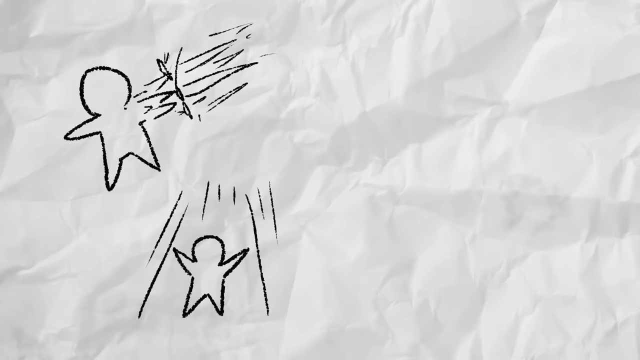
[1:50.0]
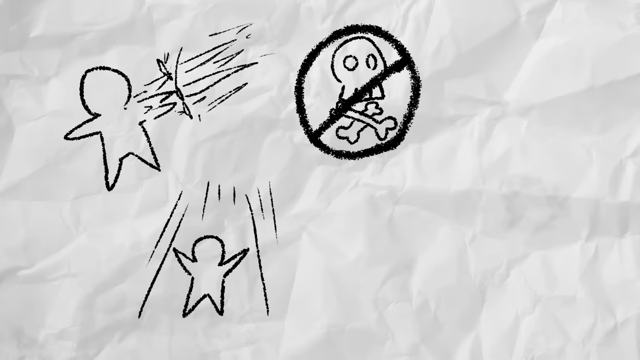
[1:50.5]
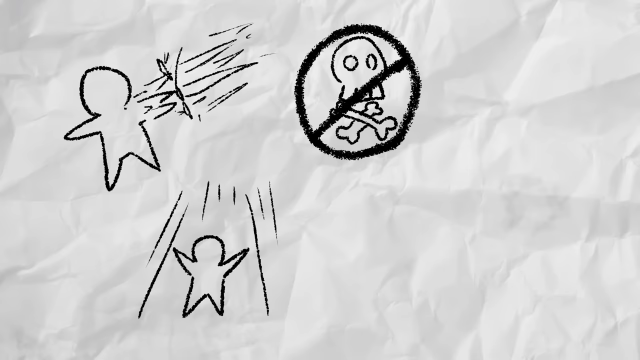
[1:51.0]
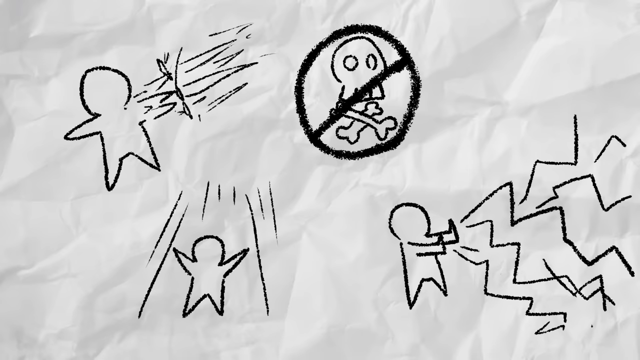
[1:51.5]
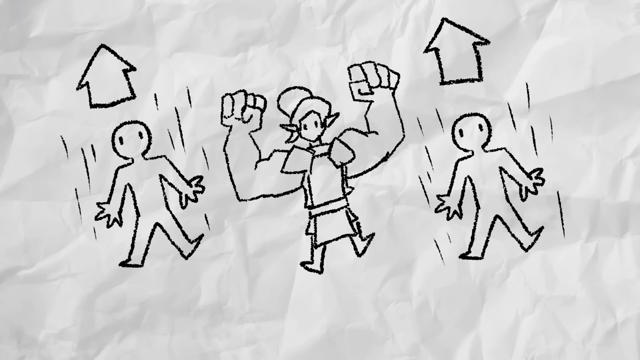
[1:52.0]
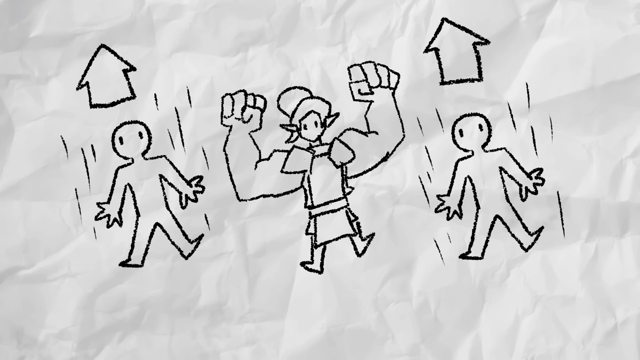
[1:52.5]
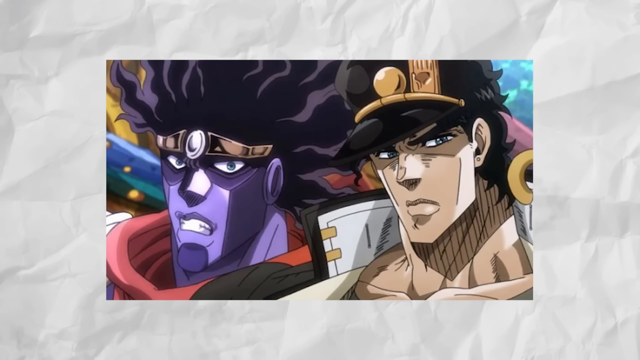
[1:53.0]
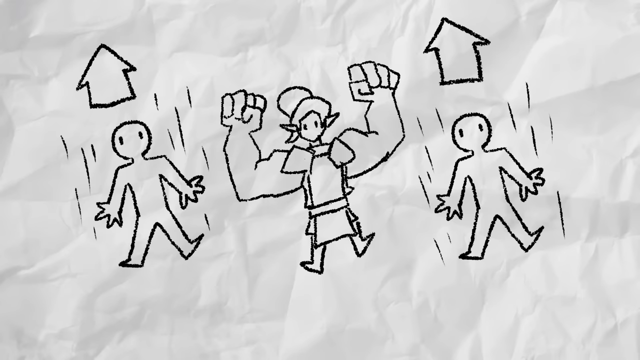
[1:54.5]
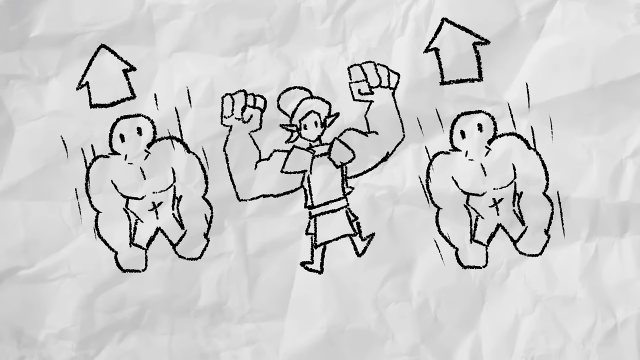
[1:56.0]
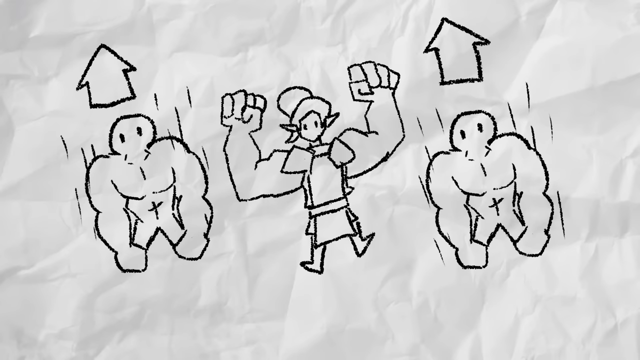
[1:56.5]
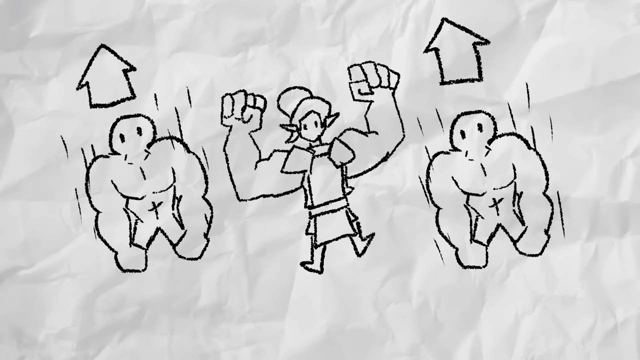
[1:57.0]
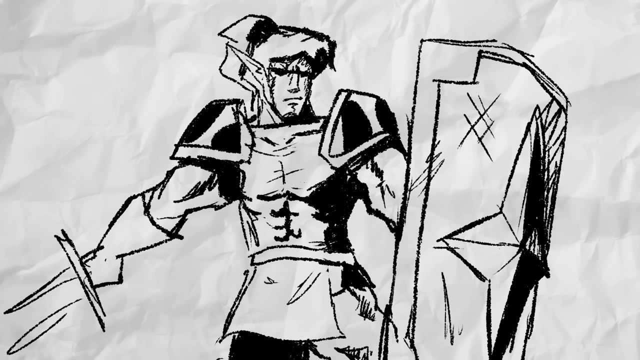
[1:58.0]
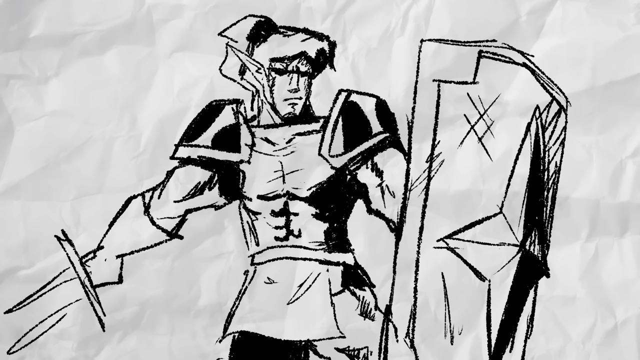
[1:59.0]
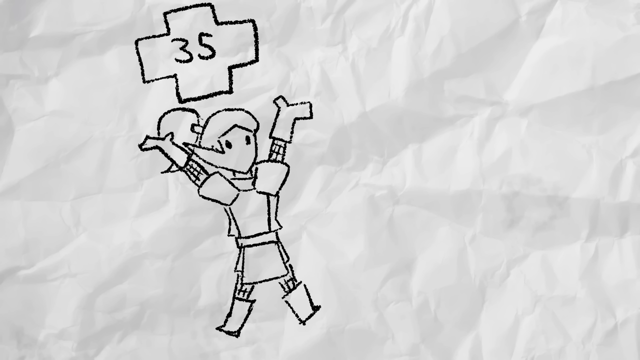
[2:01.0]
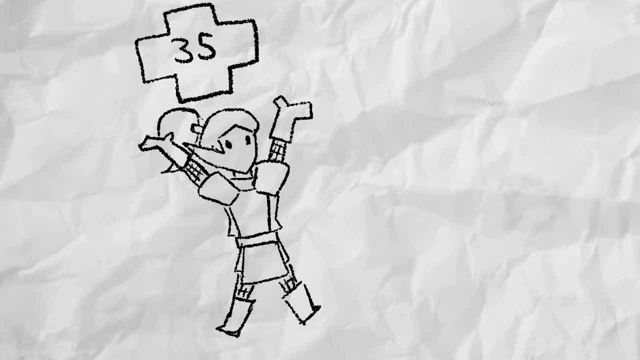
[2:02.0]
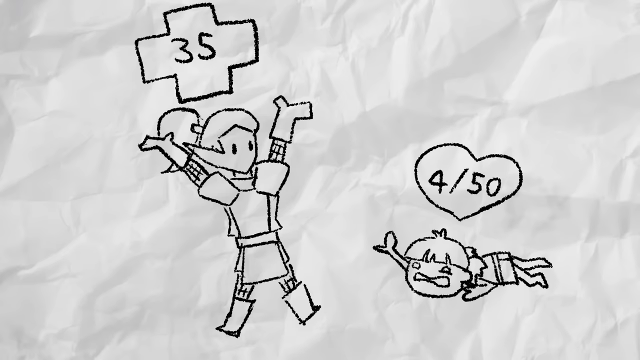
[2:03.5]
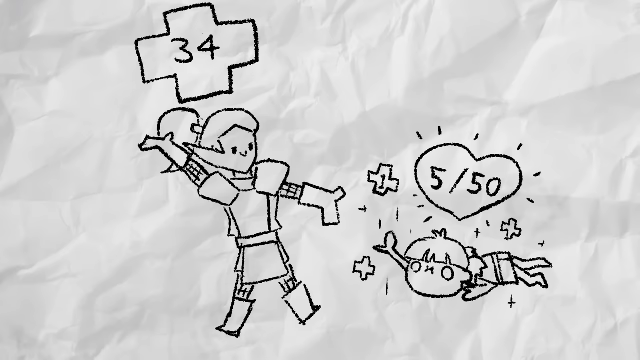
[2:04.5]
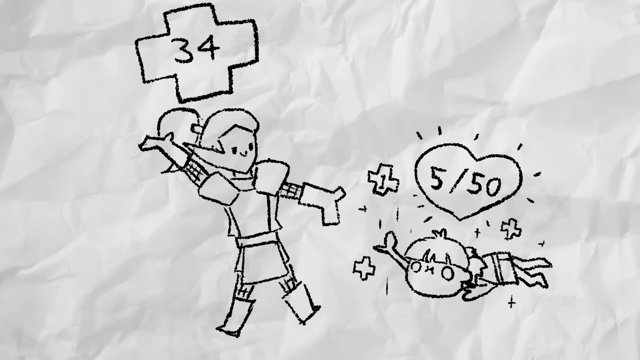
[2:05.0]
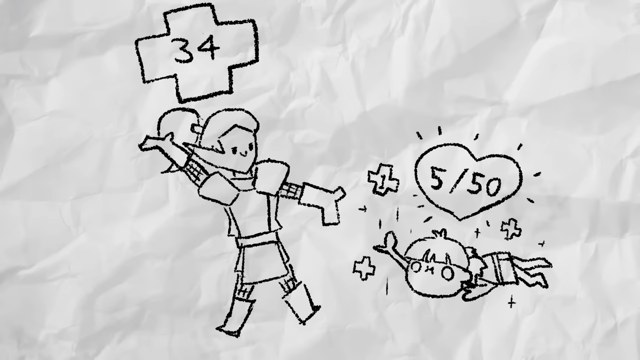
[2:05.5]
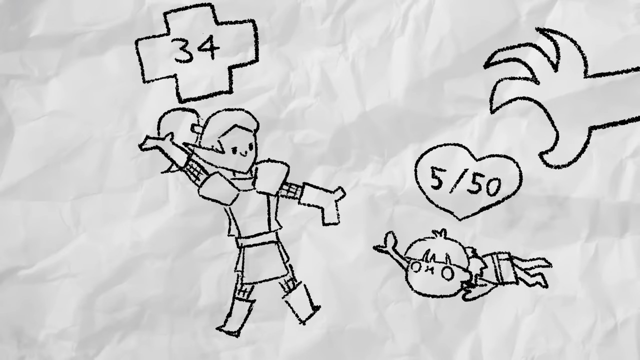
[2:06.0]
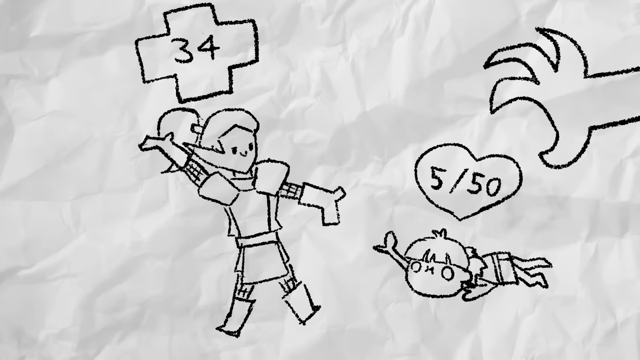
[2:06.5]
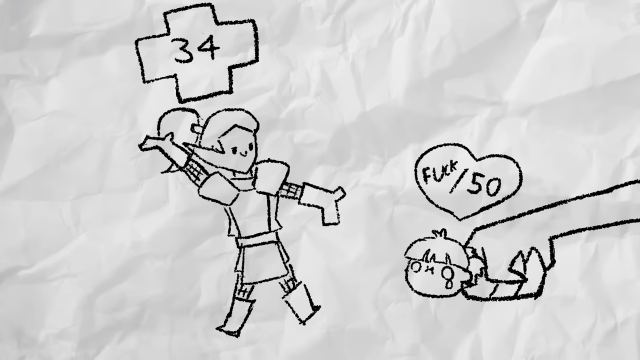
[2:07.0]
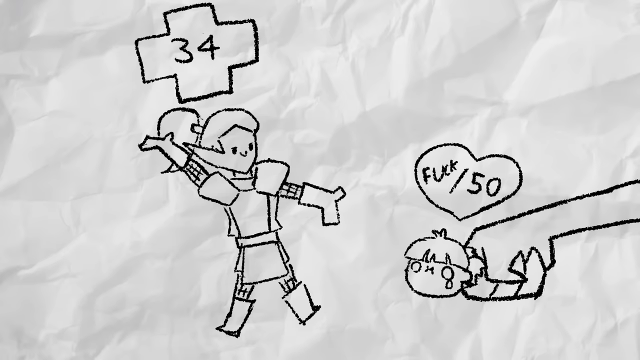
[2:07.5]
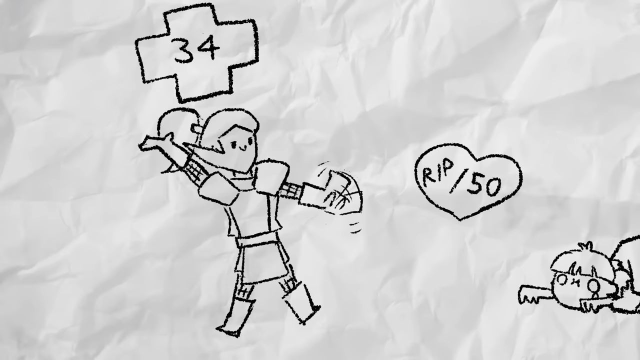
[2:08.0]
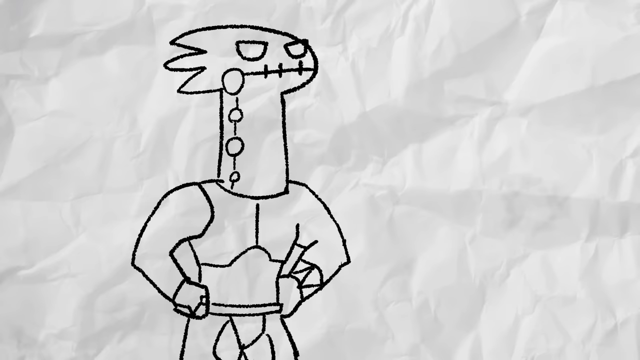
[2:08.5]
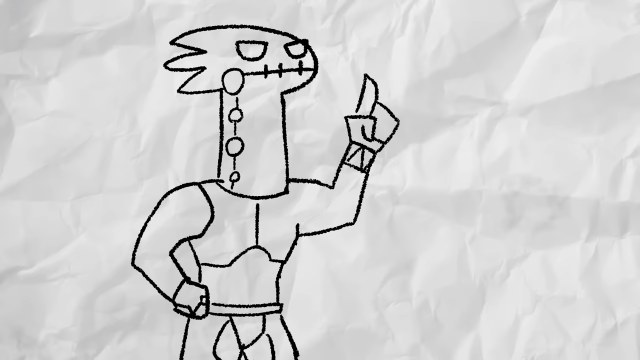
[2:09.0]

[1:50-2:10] Small black animated characters appear to be flying up in the air against a white crumpled paper background. A skull and bones with a prohibited sign over it comes up on the screen. Another of the smaller characters appears to push something away. Two of the regular people have arrows over their heads, with one of the muscular women in the center. The scene transitions to a picture resembling an anime in a lot of bold colors, with one character in purple. It transitions back to the two people with arrows over their heads and the muscular girl in the center, and the people with the arrows become muscular themselves. Then a character holds a very large sword and a shield.